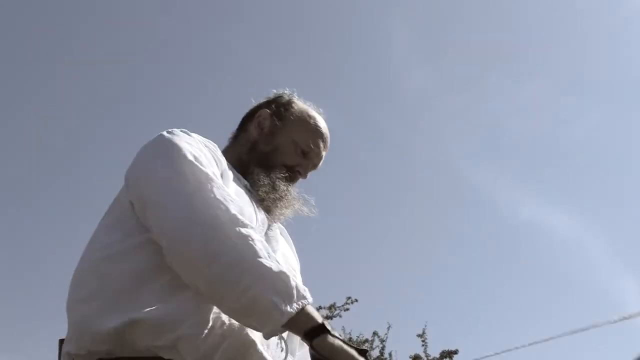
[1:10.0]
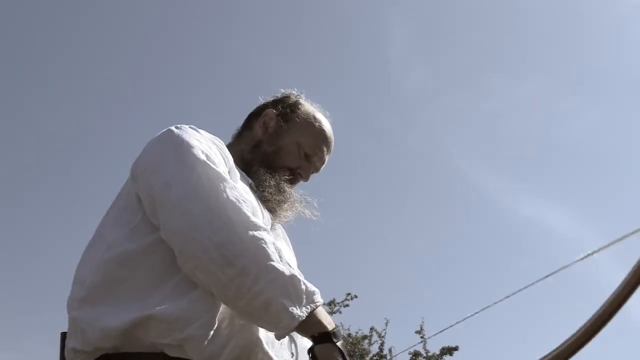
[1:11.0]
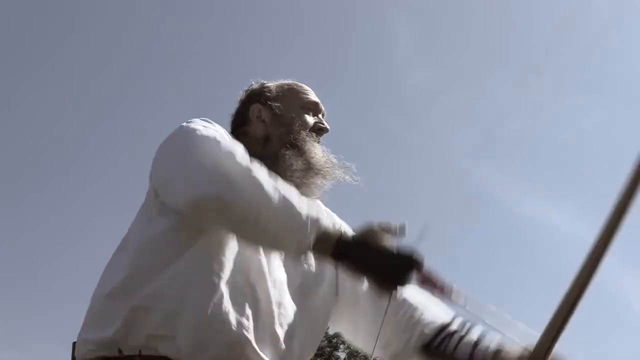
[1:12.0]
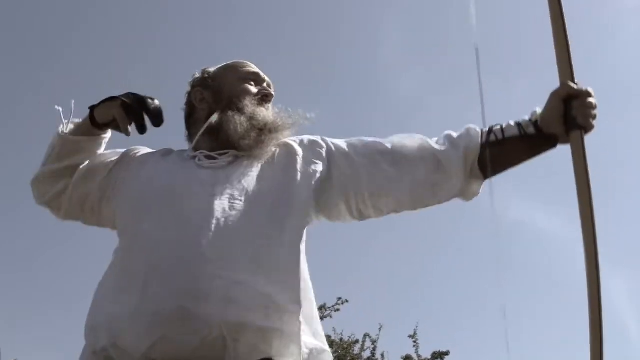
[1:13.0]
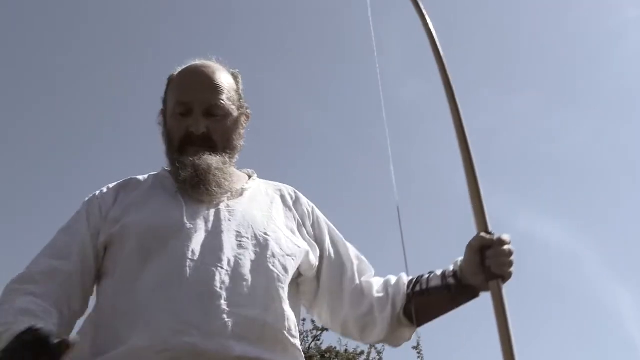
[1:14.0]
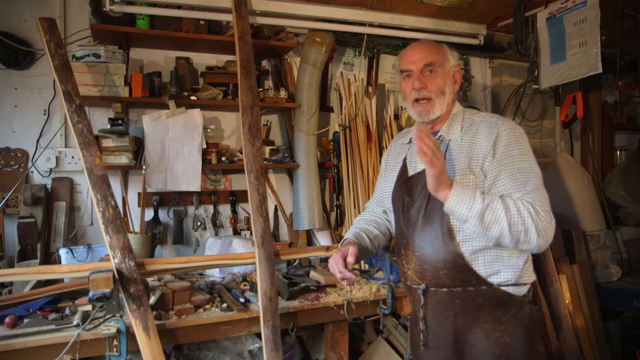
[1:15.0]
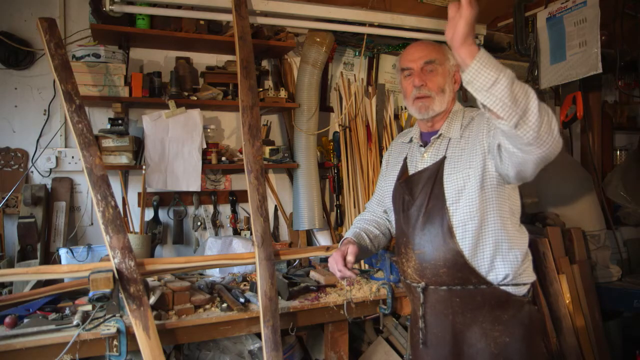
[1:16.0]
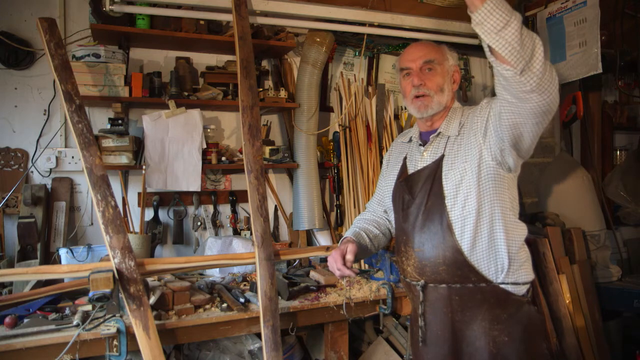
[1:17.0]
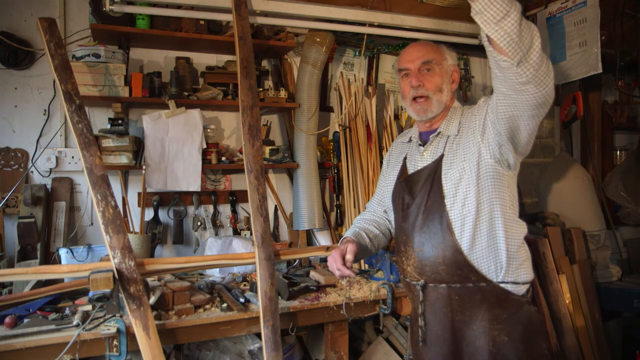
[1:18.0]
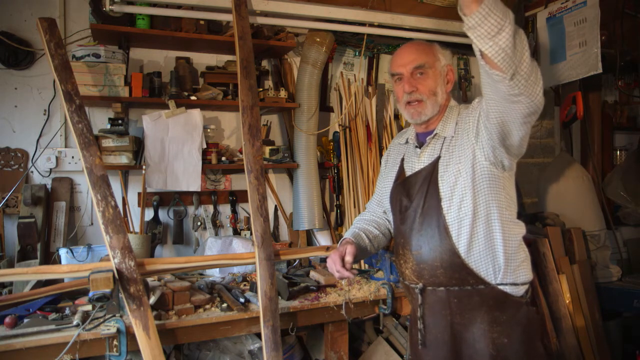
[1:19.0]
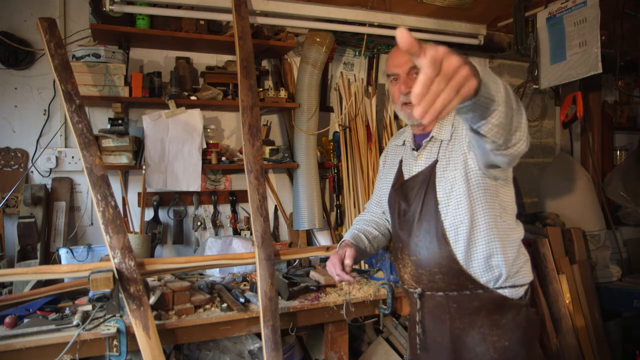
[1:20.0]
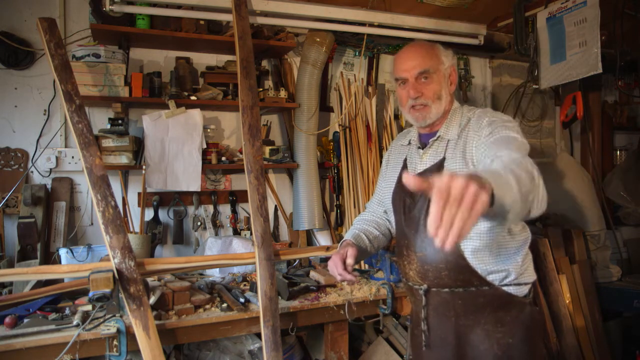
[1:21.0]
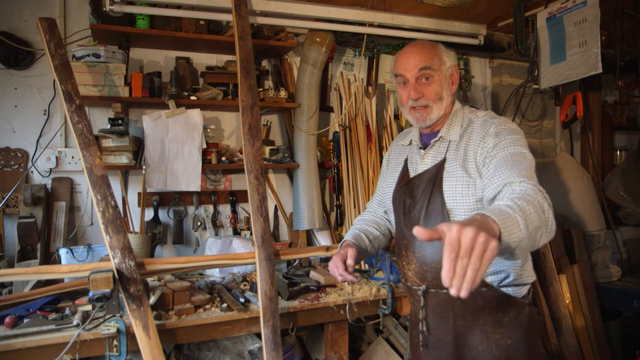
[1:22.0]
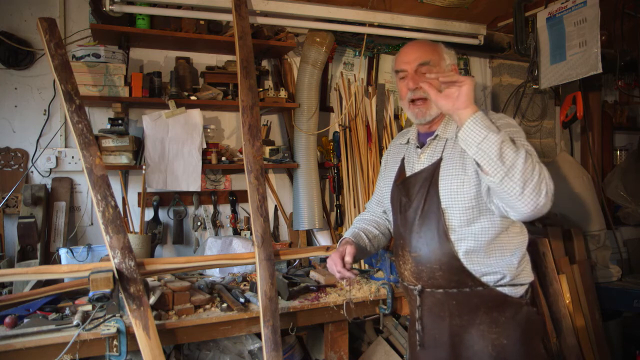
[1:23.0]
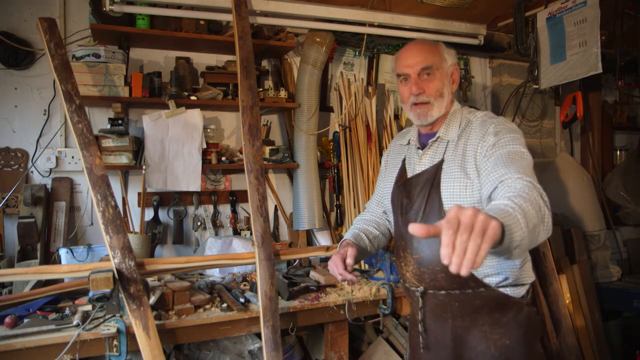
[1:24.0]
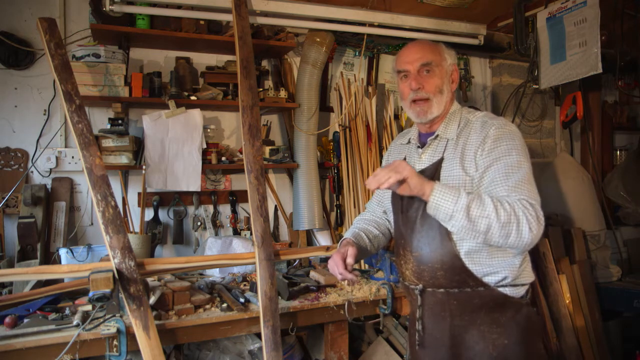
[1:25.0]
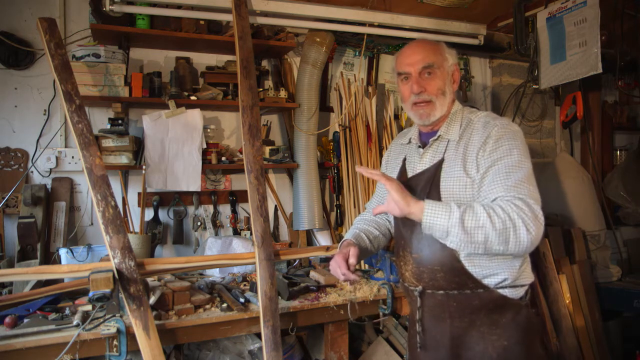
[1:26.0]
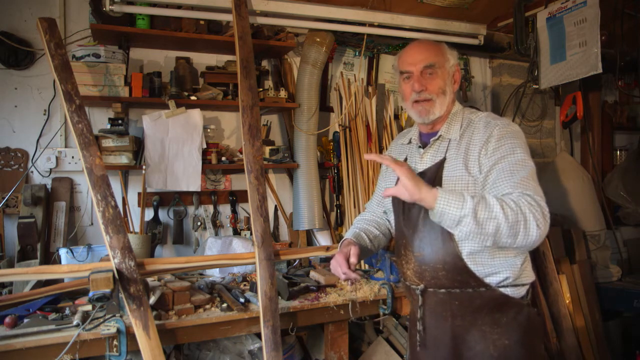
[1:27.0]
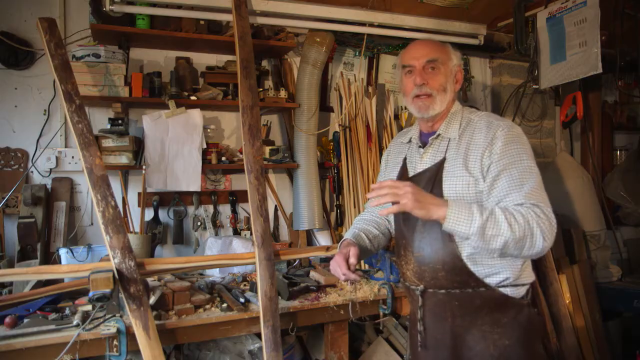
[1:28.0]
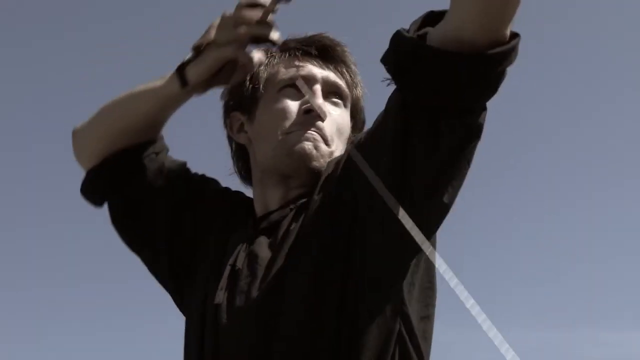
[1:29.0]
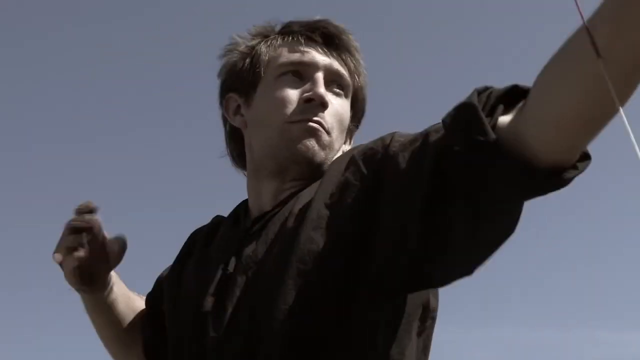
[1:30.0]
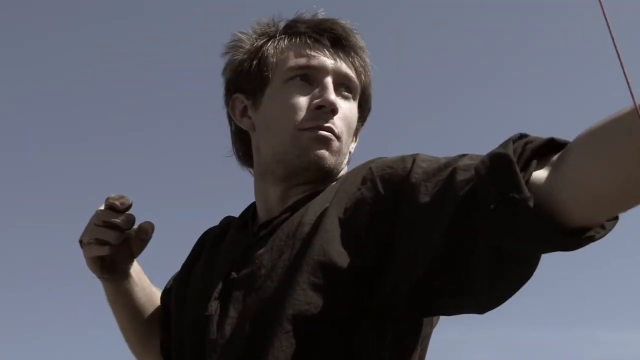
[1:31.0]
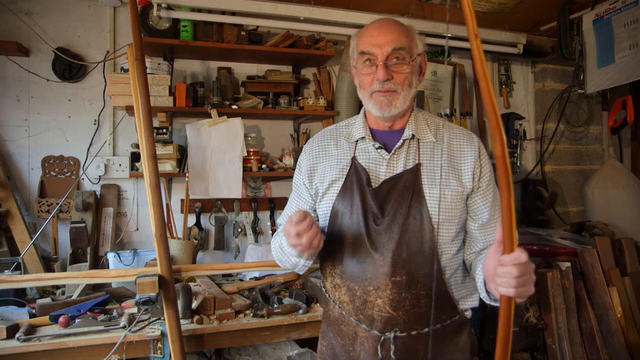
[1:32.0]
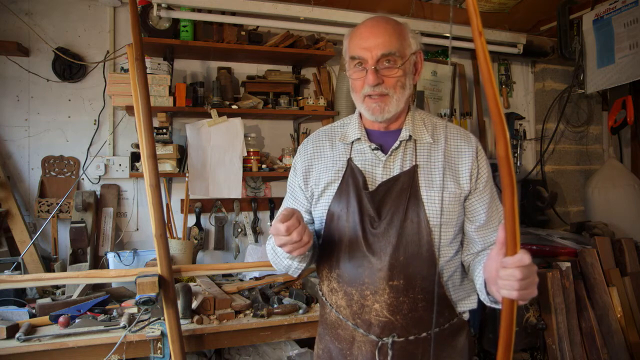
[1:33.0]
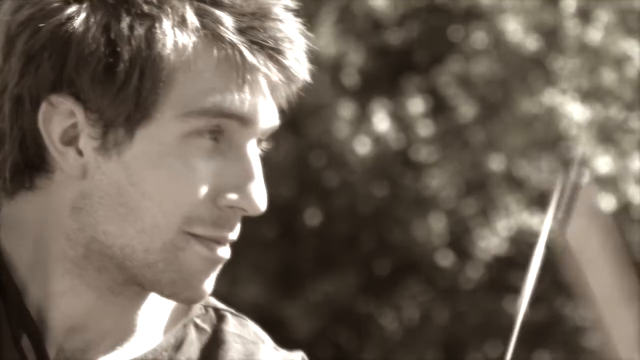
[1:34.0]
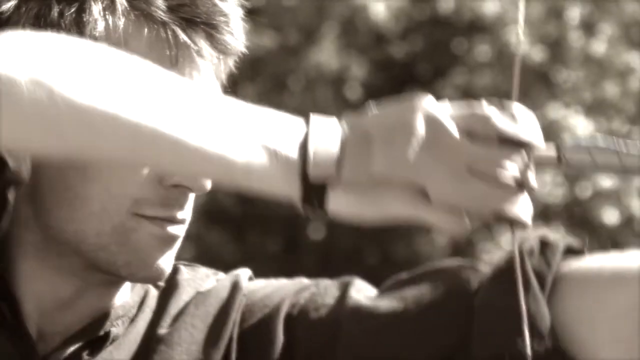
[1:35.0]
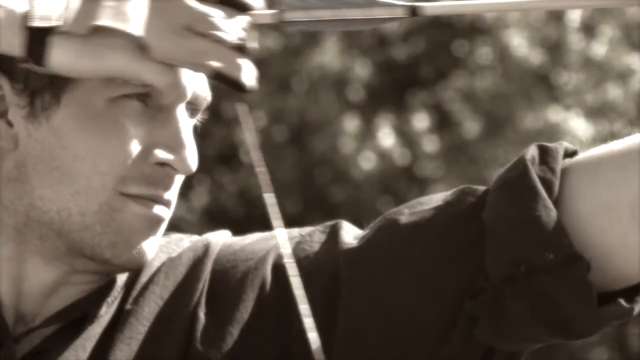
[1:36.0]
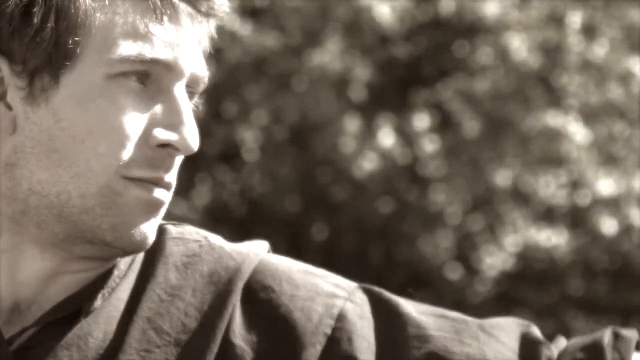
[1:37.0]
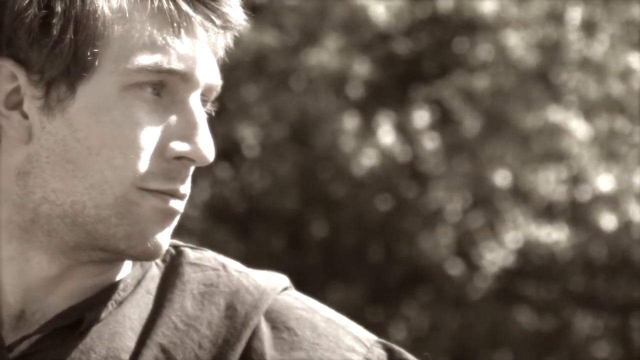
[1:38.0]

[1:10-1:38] A man in a white shirt holds an arrow in his right hand and a longbow in his left. His left hand grips the handle in the middle of the longbow, and he grips the bottom of the arrow with his index and middle fingers. Holding the arrow, he pulls back the string and lets the arrow loose, then motions to grab another arrow with his right hand. The video cuts to an old man inside a workshop, wearing a leather apron covered with wood chips and leaning on a clamp attached to a workbench covered with wood shavings. Various arrows and pieces of wood surround the workshop. He raises his left hand into the air, palm facing forward, and brings his fingers down in a sort of arcing motion, then puts his hand back, pushes it forward again, and repeatedly points the four fingers of his left hand down toward the ground. The video then cuts to a man pulling a longbow string back with his right hand and letting an arrow loose.